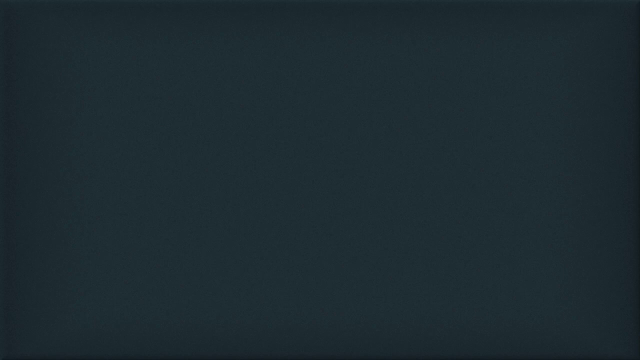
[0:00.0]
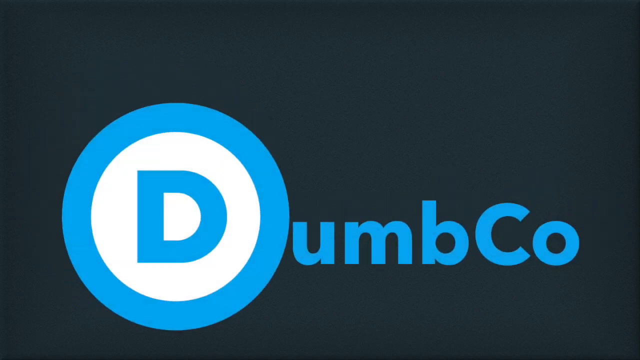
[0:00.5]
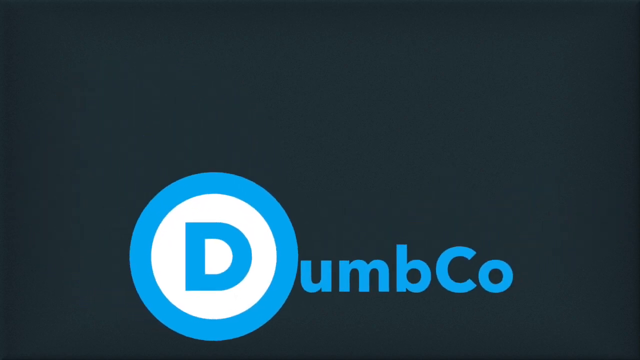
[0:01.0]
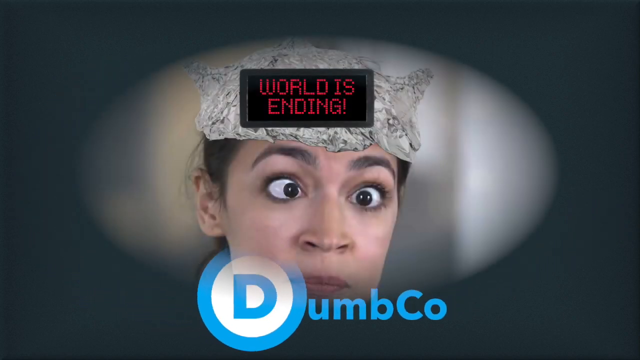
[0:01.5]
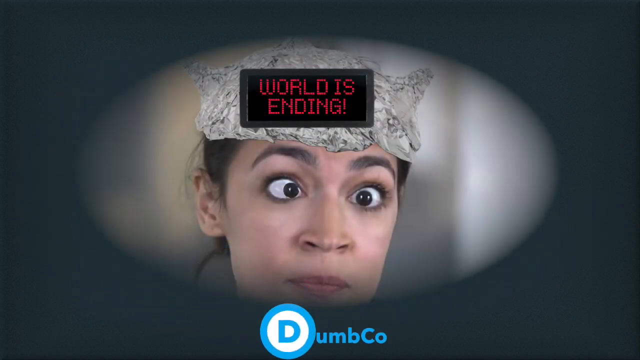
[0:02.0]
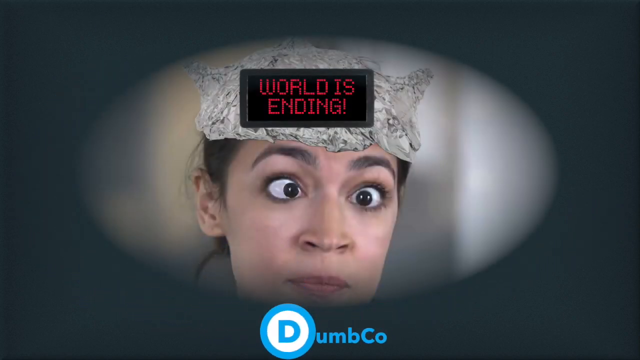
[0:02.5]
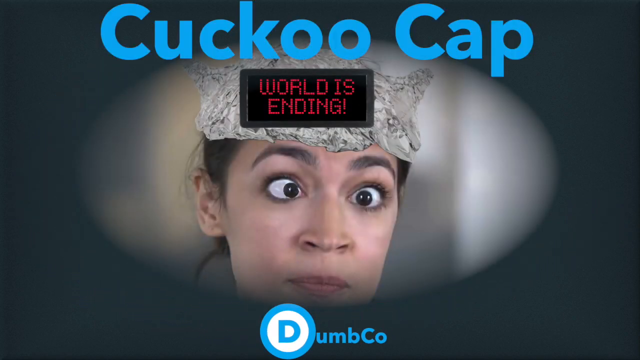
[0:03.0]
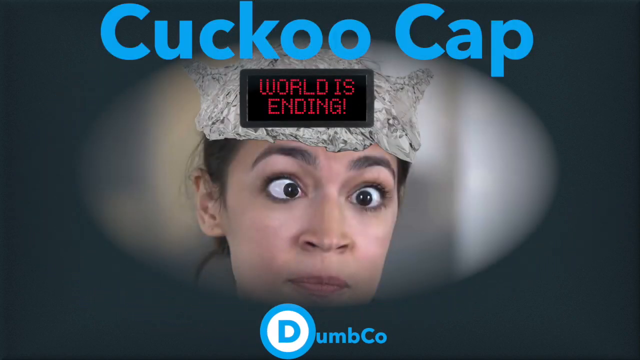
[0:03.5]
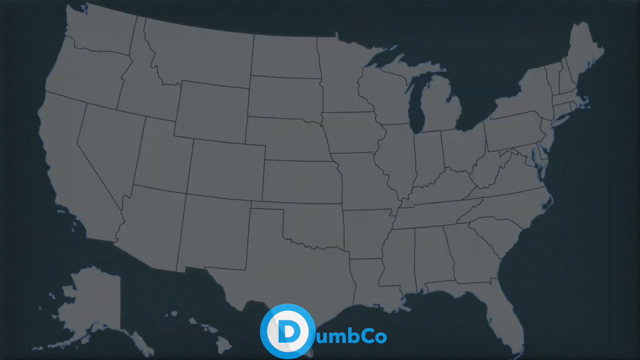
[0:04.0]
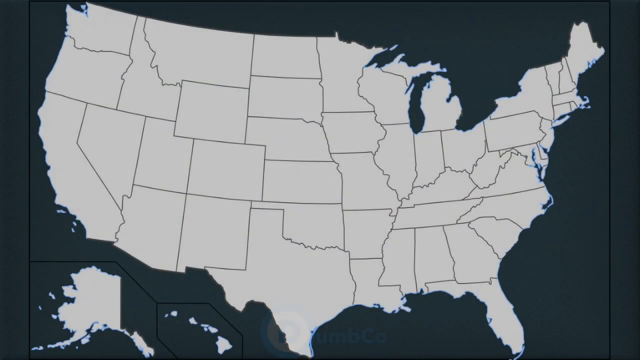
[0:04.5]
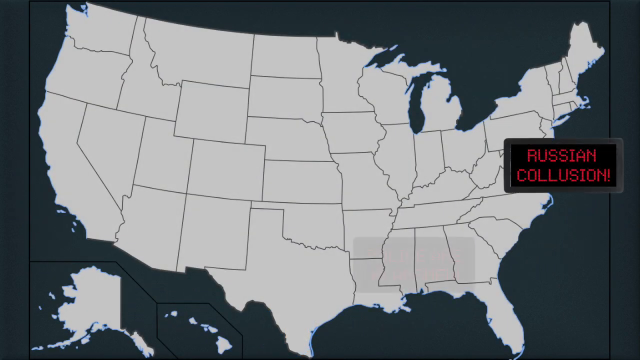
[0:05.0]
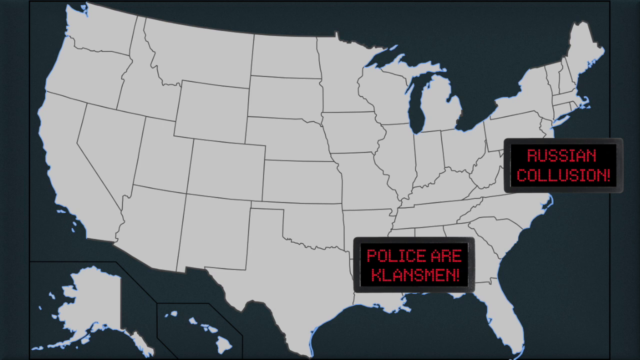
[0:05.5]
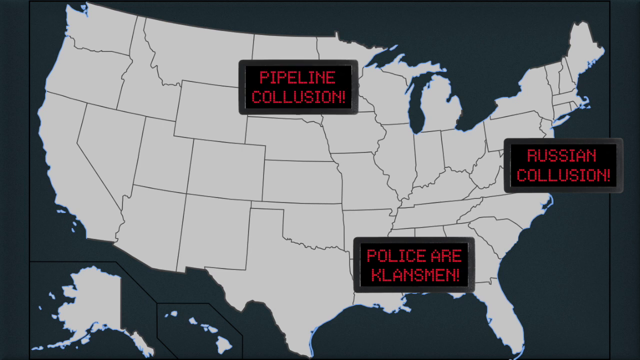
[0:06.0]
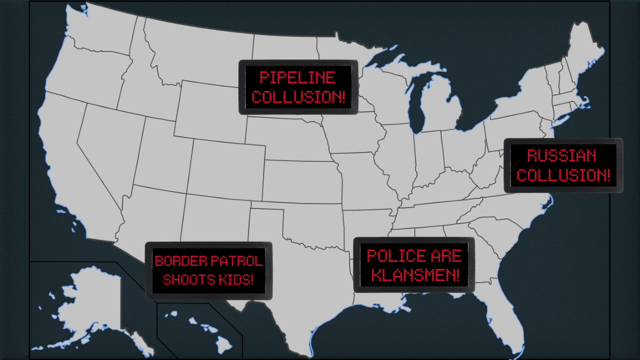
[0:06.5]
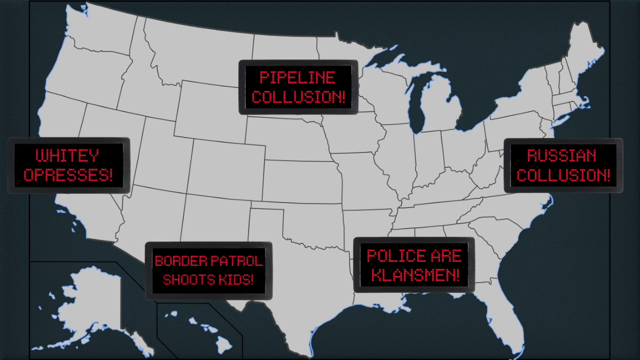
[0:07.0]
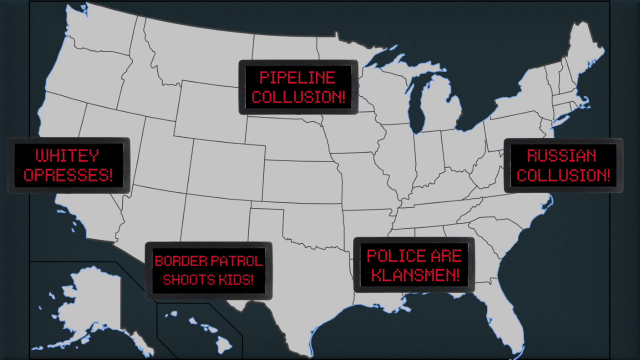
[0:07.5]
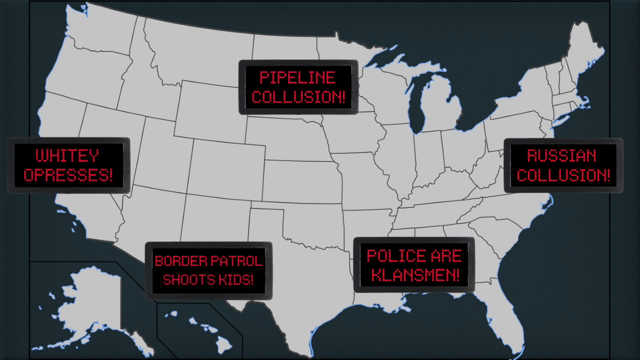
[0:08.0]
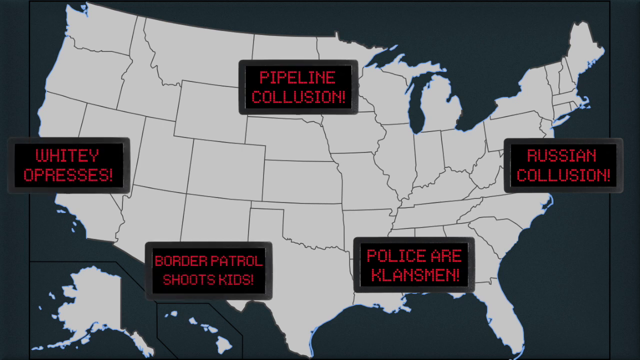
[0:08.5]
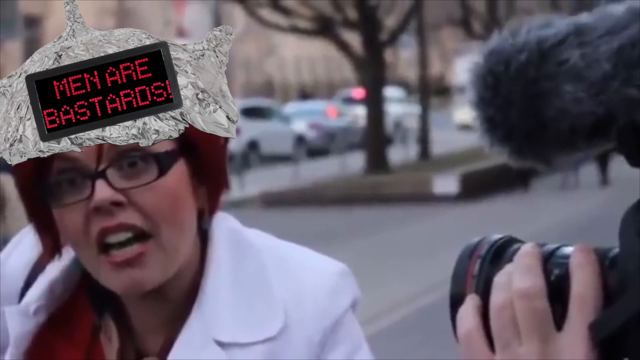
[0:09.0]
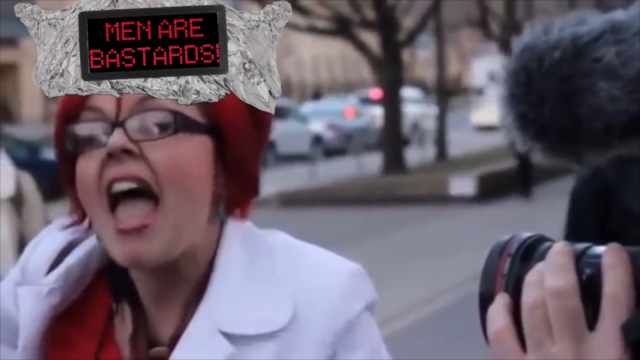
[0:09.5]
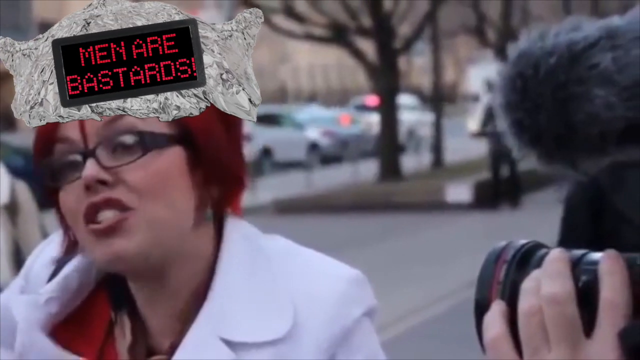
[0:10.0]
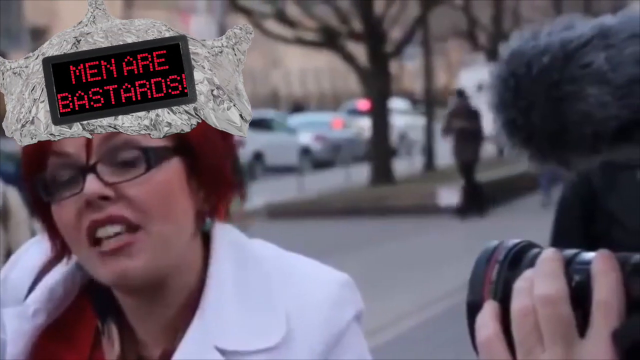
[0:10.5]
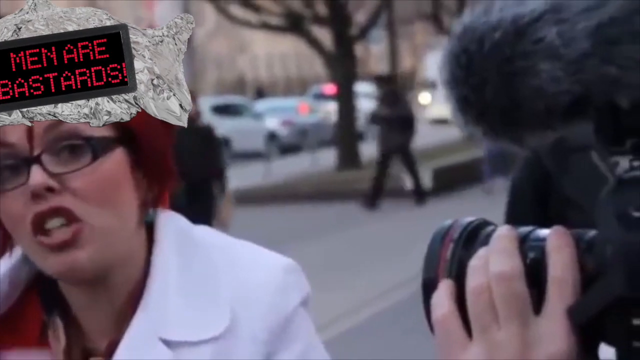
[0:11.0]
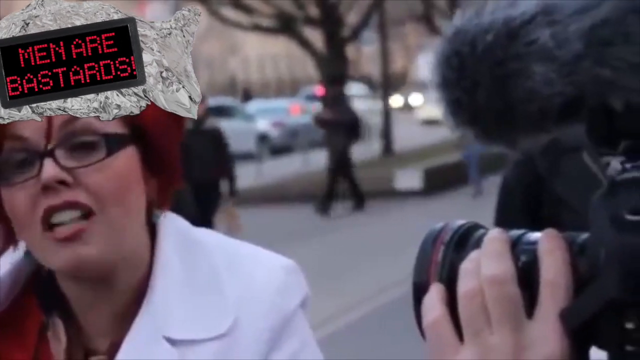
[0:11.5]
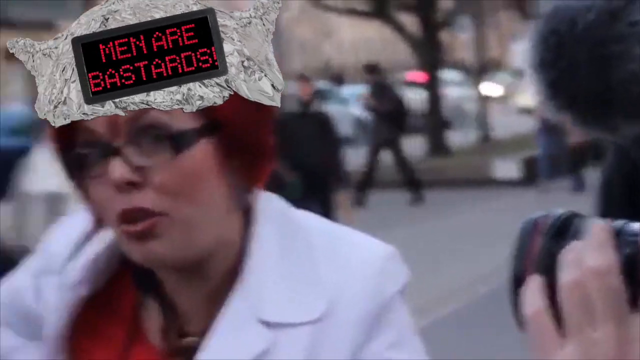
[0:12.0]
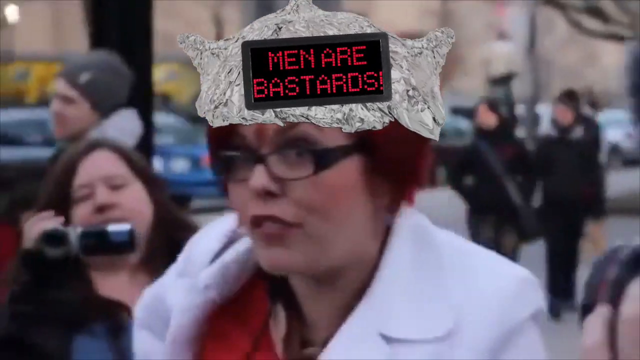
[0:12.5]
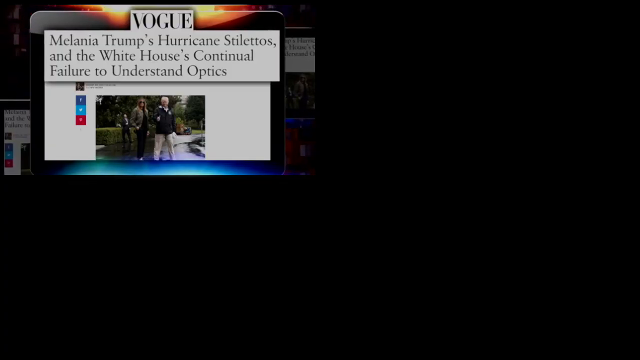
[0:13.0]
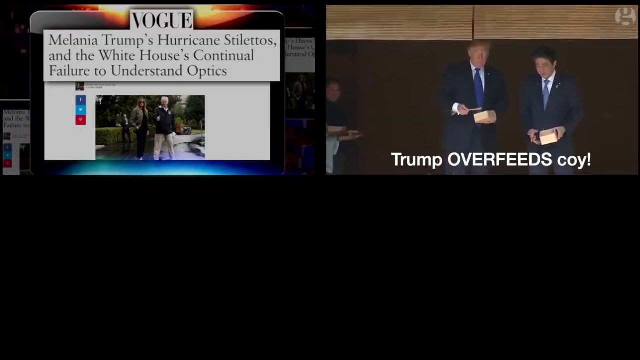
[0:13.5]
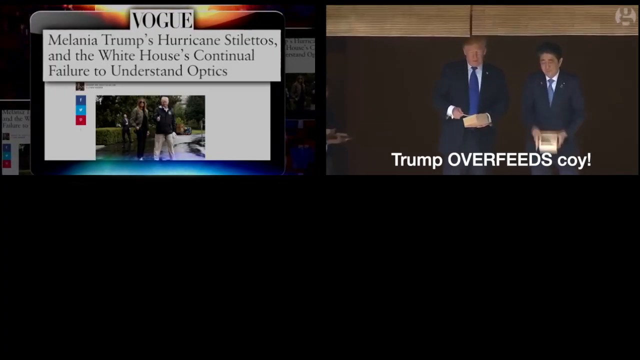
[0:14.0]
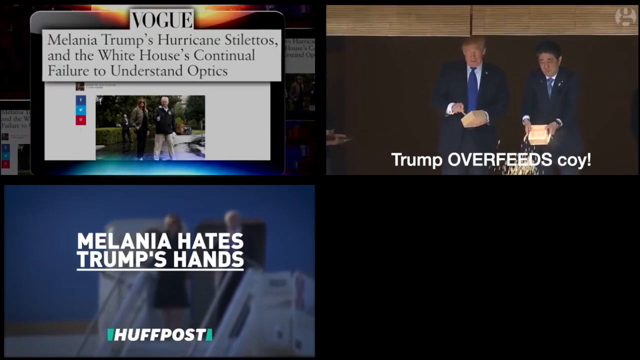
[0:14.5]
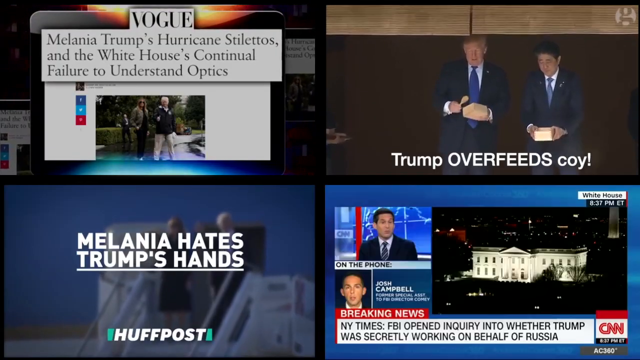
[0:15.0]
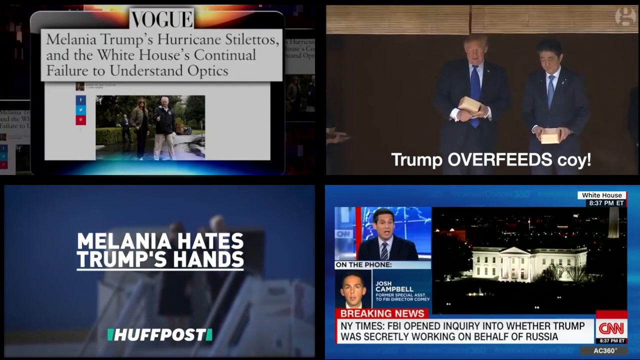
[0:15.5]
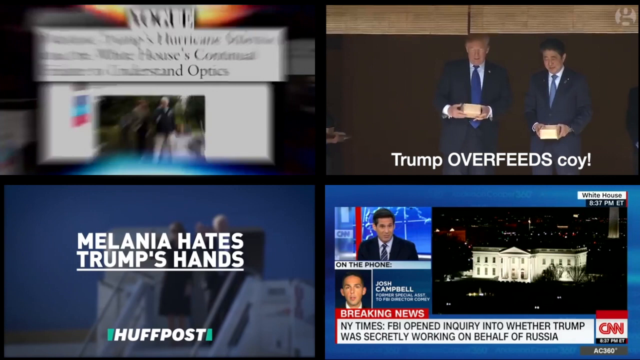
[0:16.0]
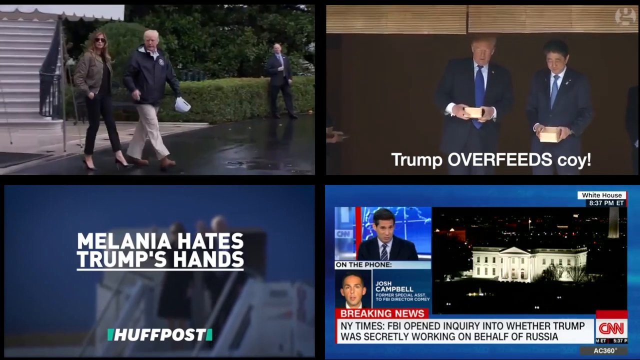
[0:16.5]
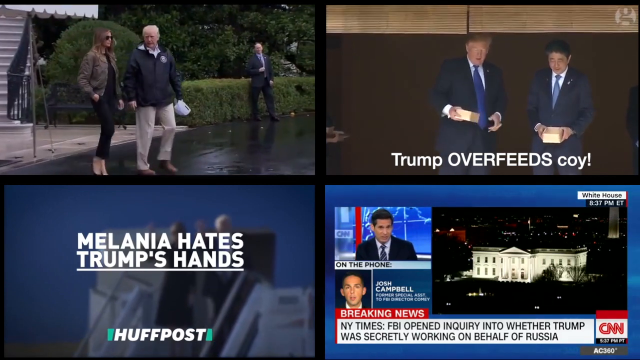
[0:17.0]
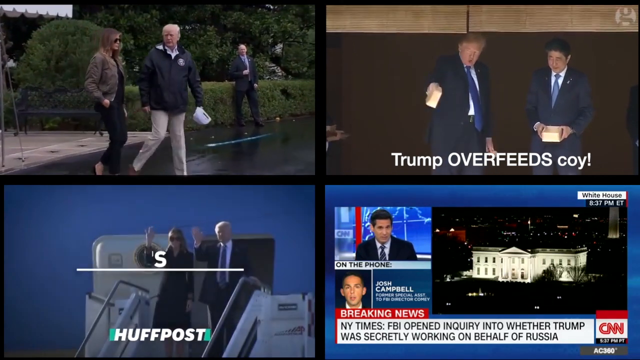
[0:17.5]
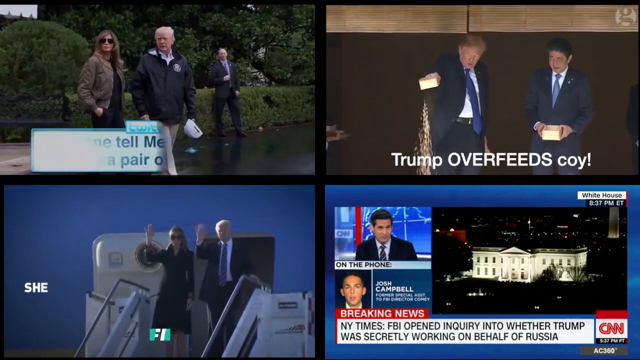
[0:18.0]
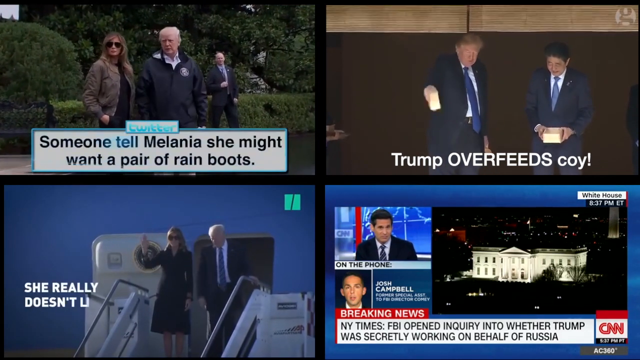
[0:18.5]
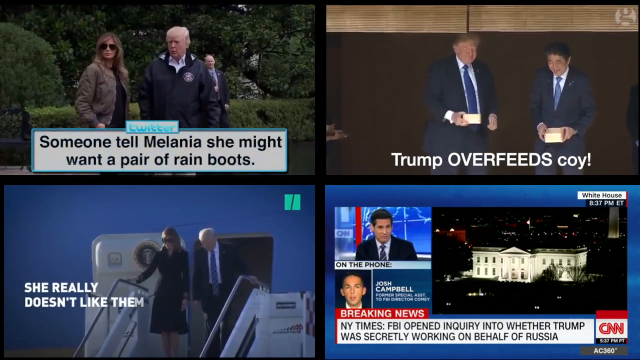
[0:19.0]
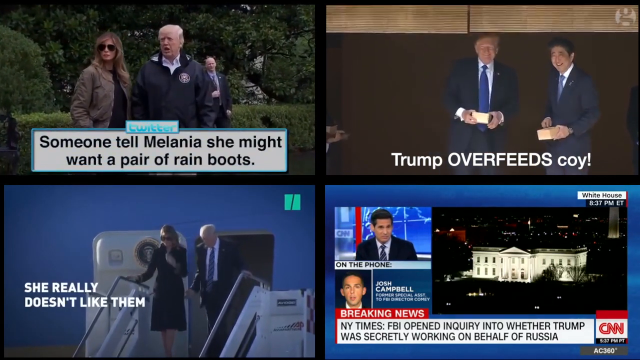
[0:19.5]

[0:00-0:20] A black screen shows a round, bullseye-style target circle that is blue on the outer part and white on the inner part, with a large "D" in the center. To the right of the circle are the letters "UMB" and a capital "C", so the whole thing reads "dumb Co". This graphic flashes on the screen and disappears toward the bottom. Next, a woman in a tinfoil hat appears with her eyes looking toward each other, making a frustrated or crazy expression. An oval shape around her shows part of her wall, and outside the oval the picture is black. On her forehead is a small sign that looks like a superimposed graphic, with a brown frame, a black background and red lettering reading "world is ending!" At the top, "cuckoo cap" appears in blue letters. A picture of the United States follows, then different signs. A video then shows a woman in a white jacket wearing a tinfoil hat with a sign on it reading "men are" followed by the letters B-A-S-T-A-R-D-S. She has very vibrant short red hair and glasses. Someone is filming her on the street, and it looks like someone added the tinfoil and the sign graphic onto her. There are people behind her filming. The video then goes to an end screen with different thumbnails of different events.